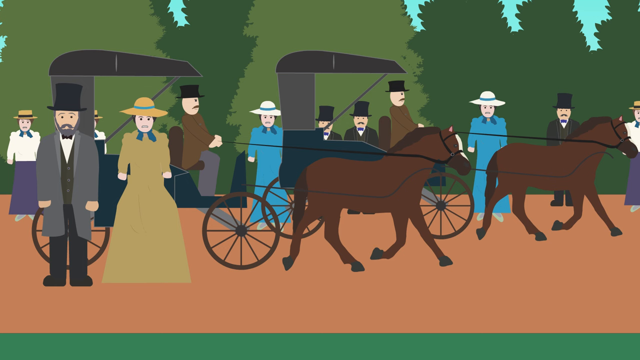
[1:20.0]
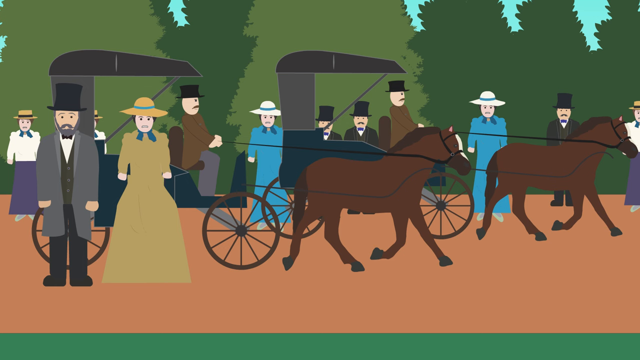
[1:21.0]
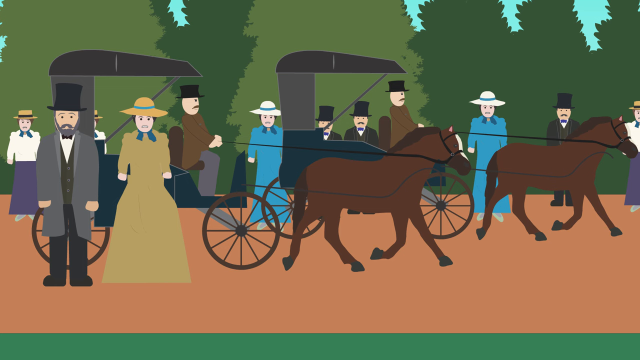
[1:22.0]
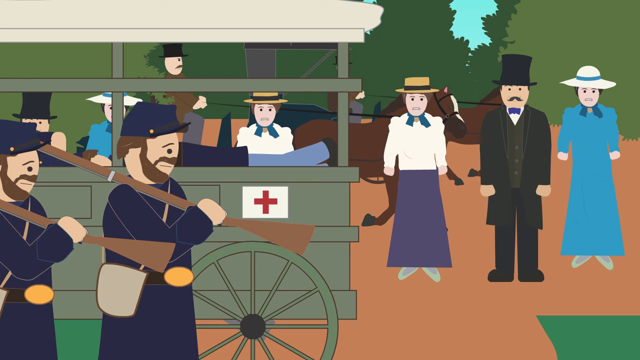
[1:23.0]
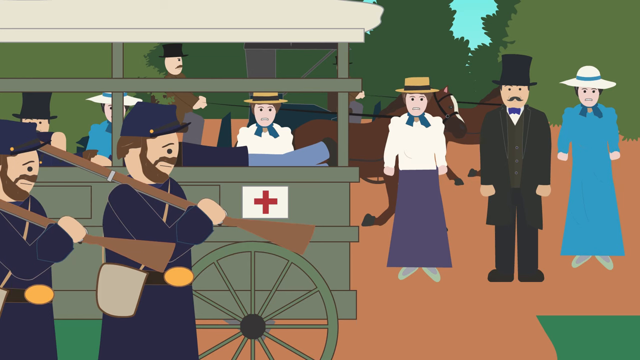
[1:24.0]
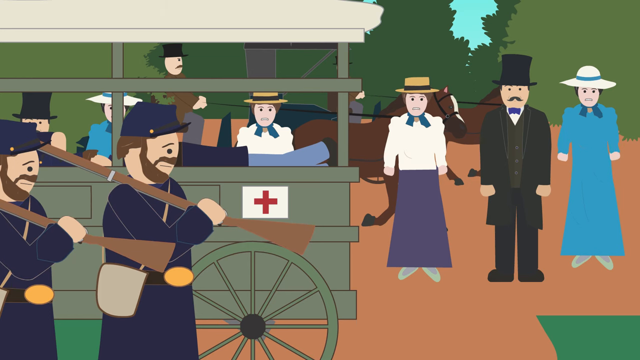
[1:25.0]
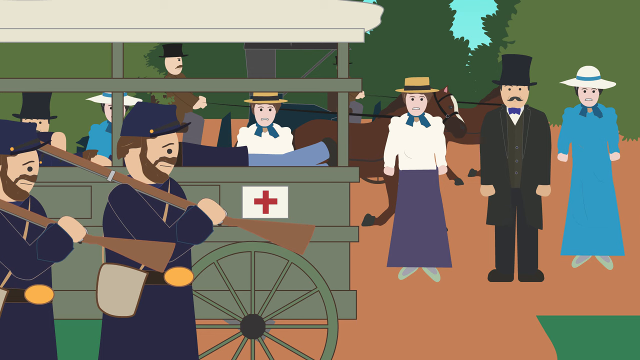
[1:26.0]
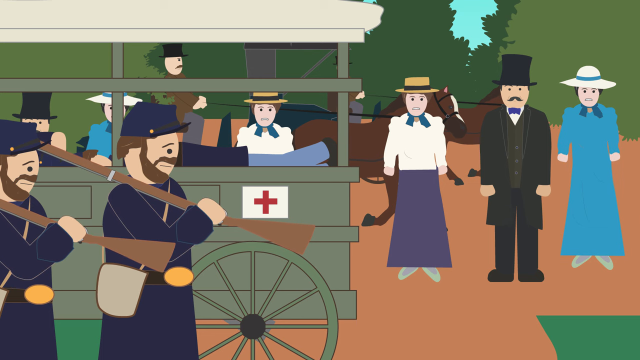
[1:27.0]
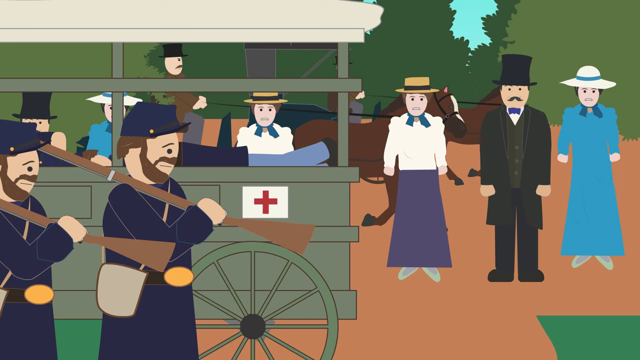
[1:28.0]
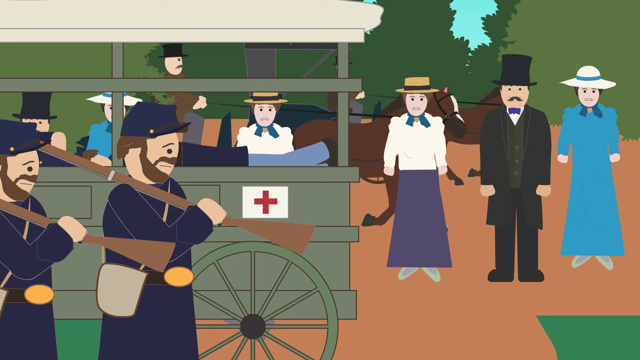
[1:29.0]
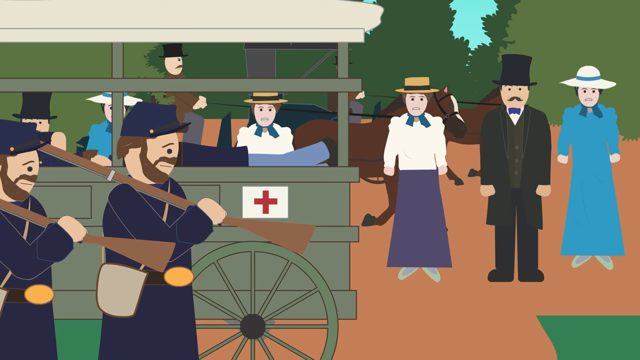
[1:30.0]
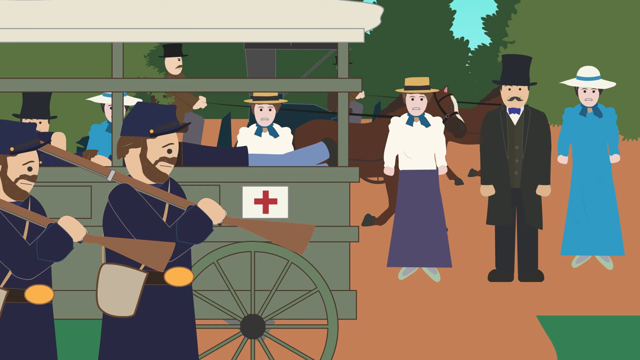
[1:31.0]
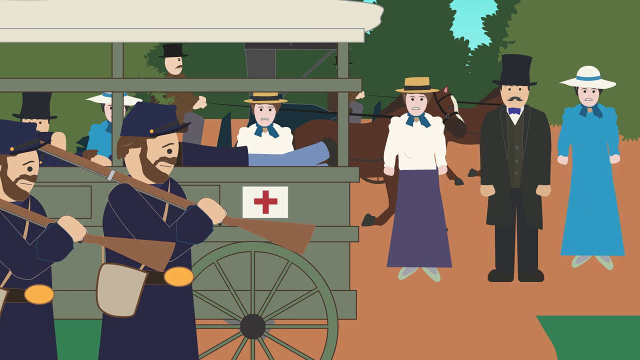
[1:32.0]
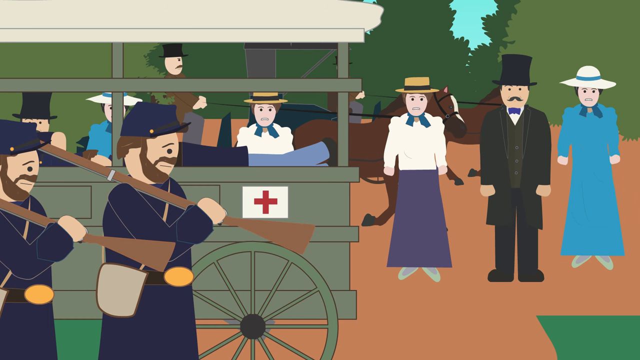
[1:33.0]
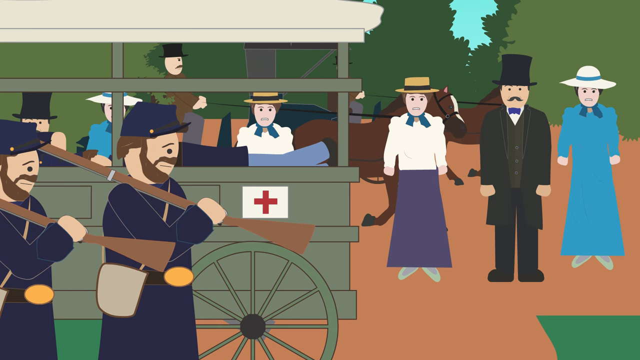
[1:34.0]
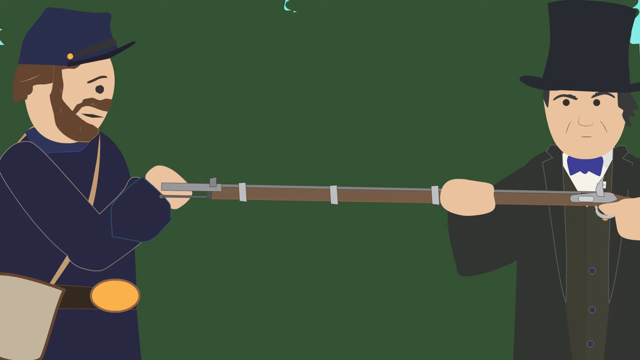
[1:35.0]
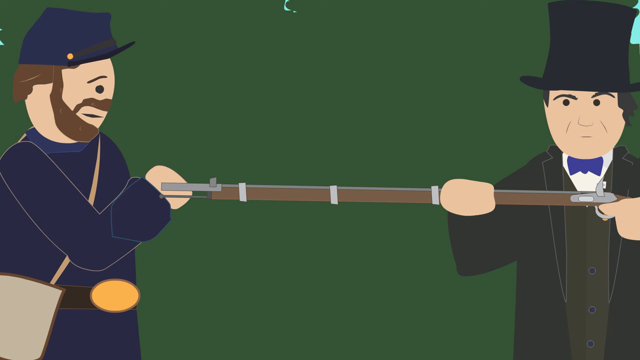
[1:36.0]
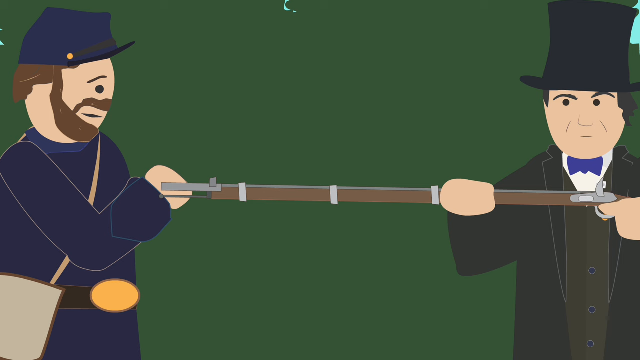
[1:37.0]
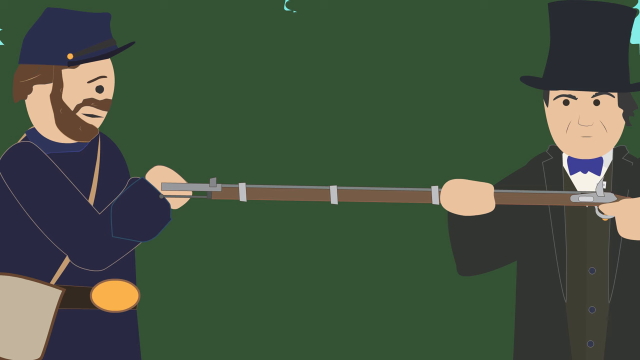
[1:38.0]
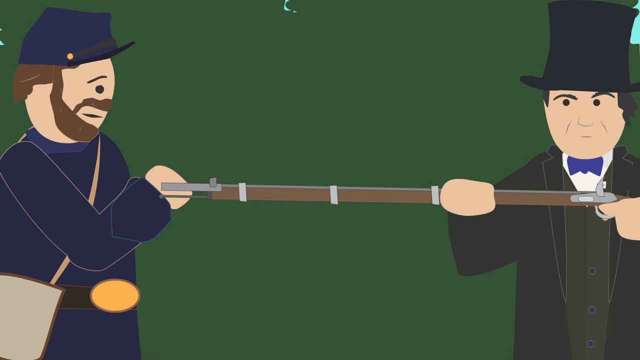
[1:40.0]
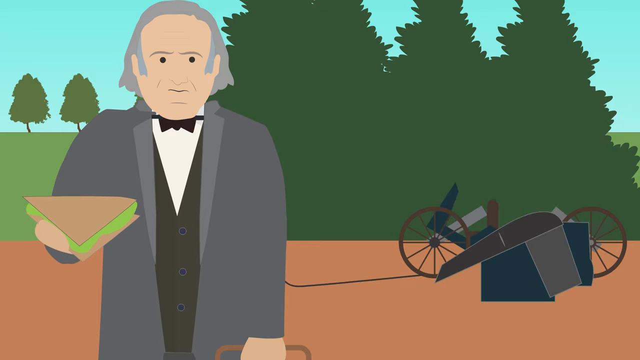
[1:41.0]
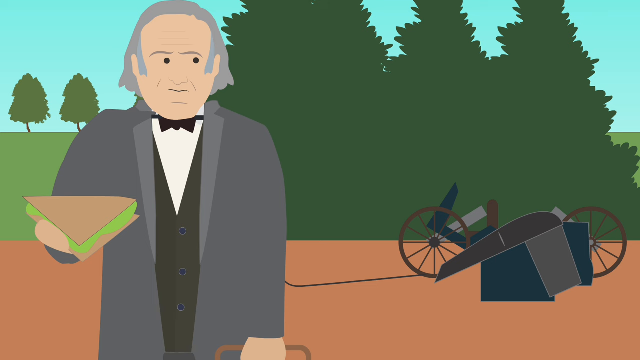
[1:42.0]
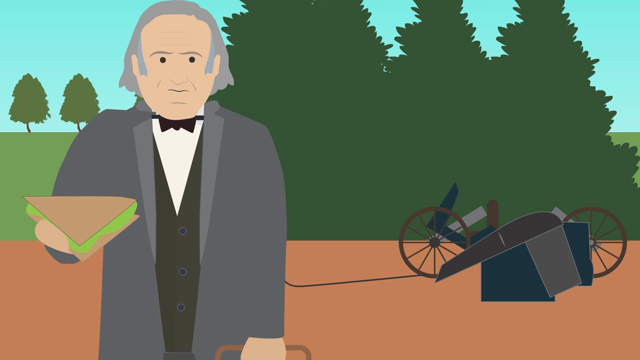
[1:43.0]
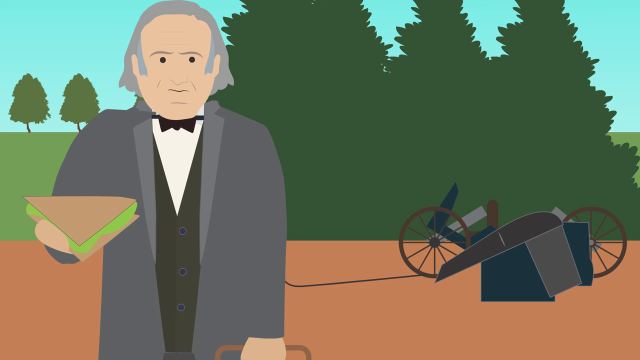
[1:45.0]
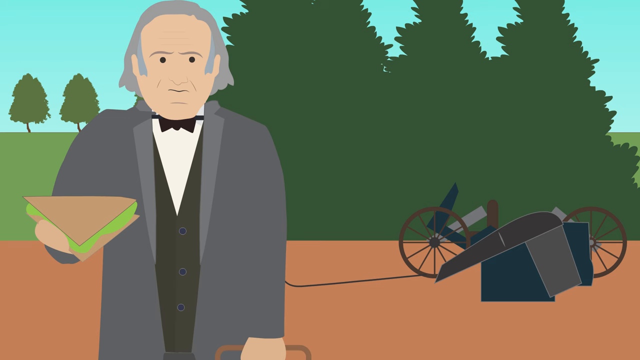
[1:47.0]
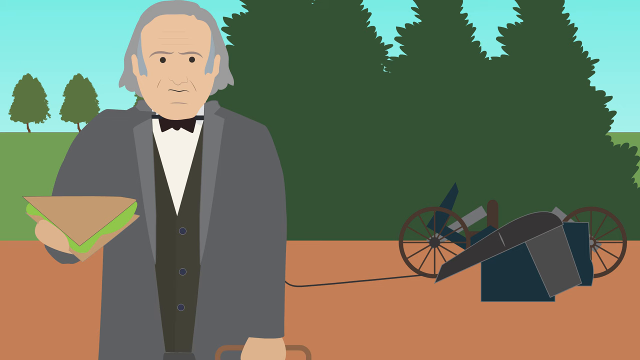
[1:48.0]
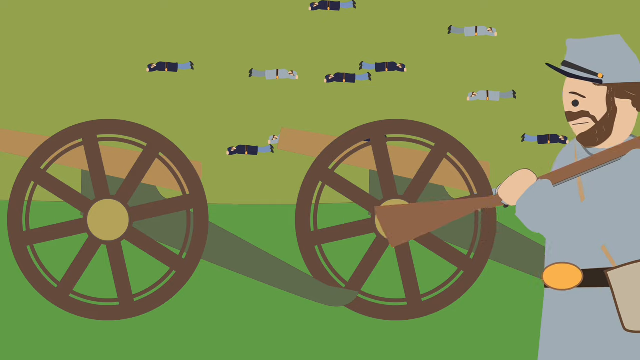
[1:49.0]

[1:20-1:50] A group of townsfolk gathered on a hillside has a picnic while watching the Civil War play out below them, using binoculars to watch the fighting in the fields and valleys. The scenes also show casualties and death. In one scene, it looks like a man is standing and eating a sandwich while his carriage has crashed behind him, destroyed, possibly by gunfire or cannon fire.